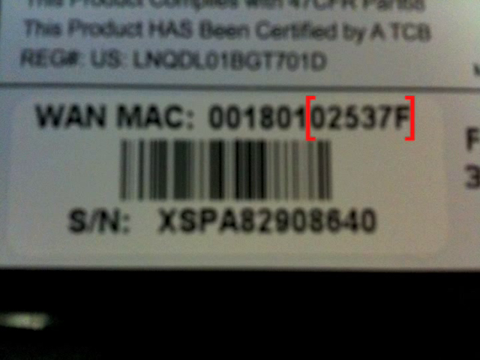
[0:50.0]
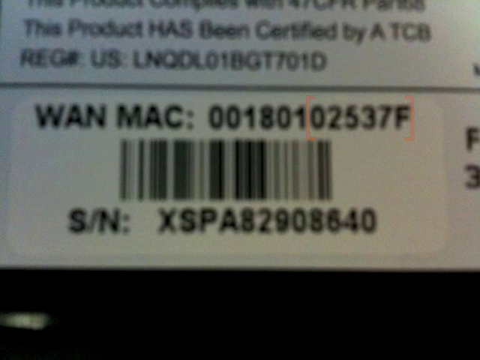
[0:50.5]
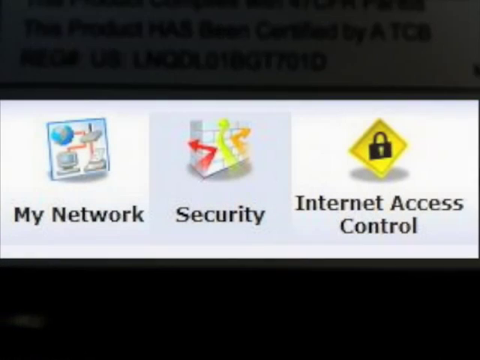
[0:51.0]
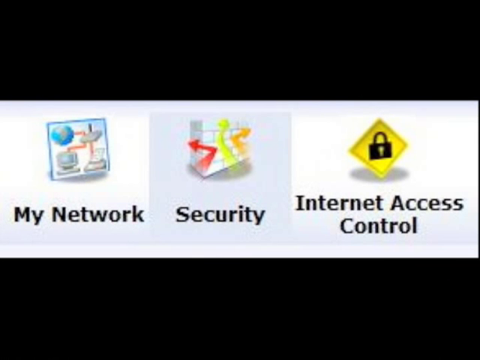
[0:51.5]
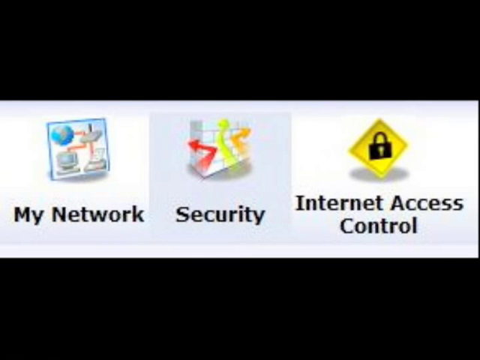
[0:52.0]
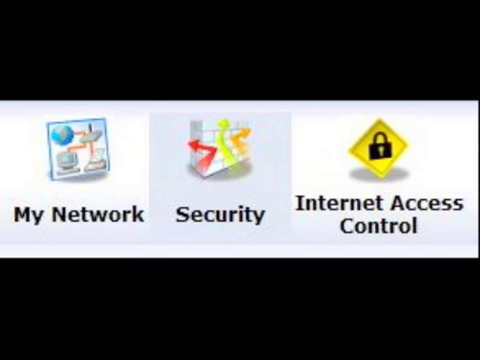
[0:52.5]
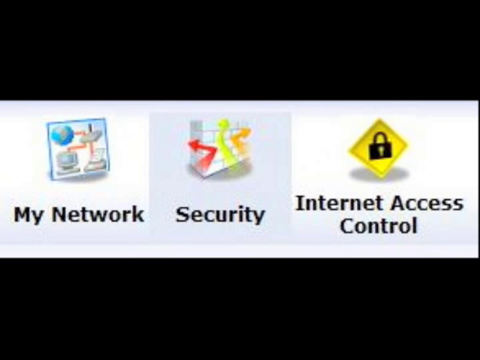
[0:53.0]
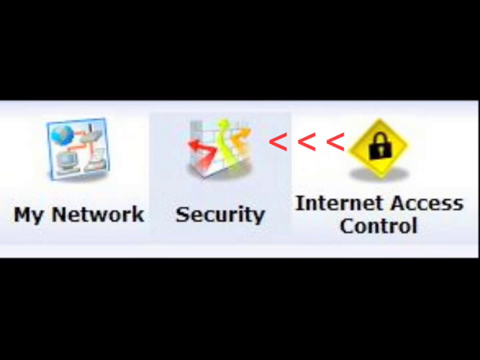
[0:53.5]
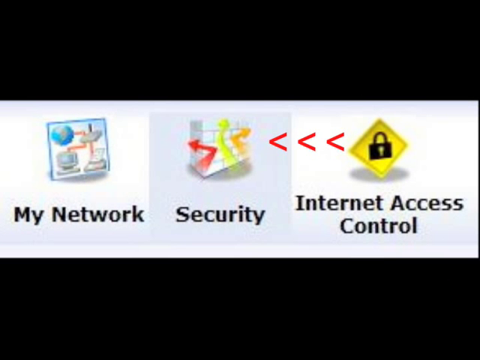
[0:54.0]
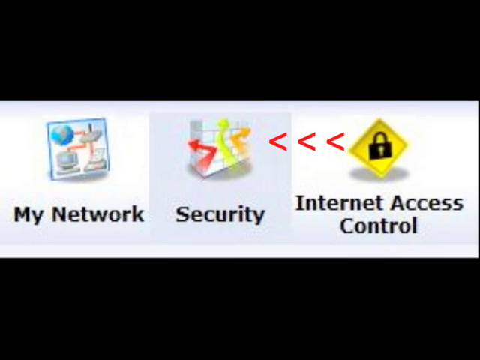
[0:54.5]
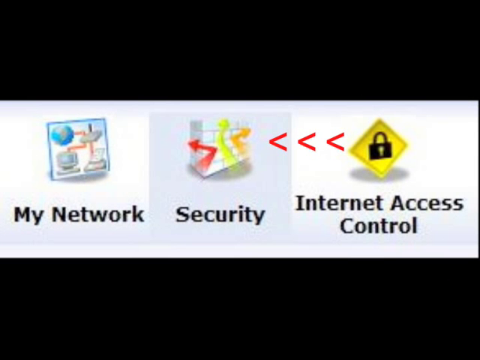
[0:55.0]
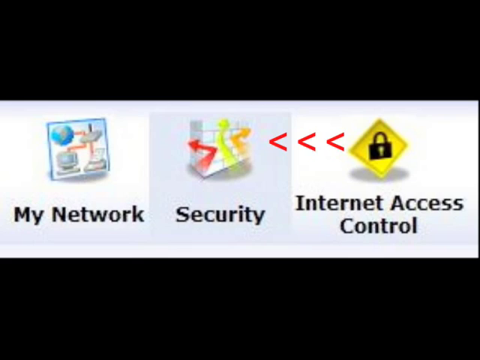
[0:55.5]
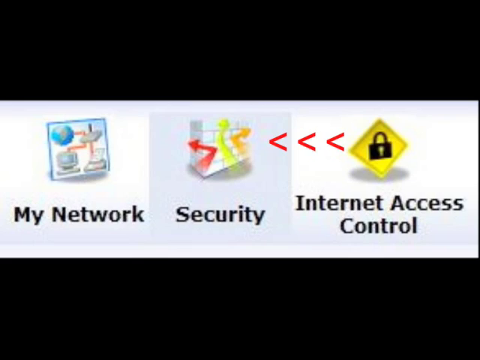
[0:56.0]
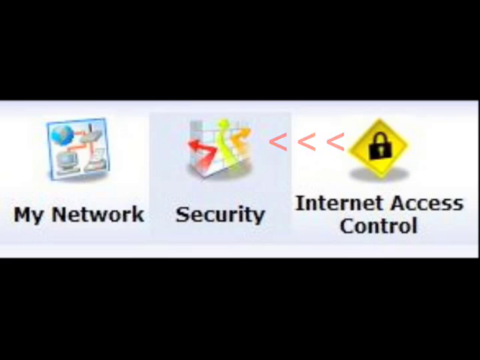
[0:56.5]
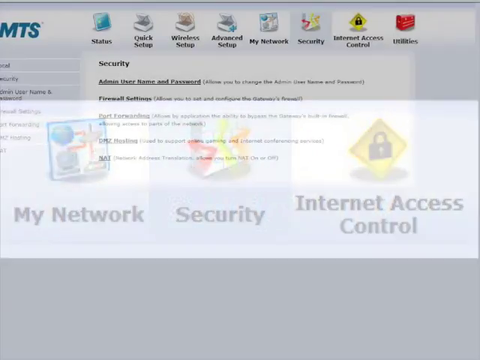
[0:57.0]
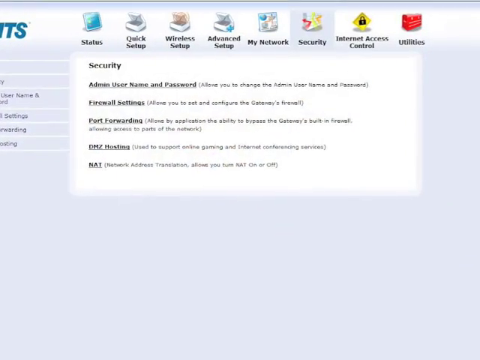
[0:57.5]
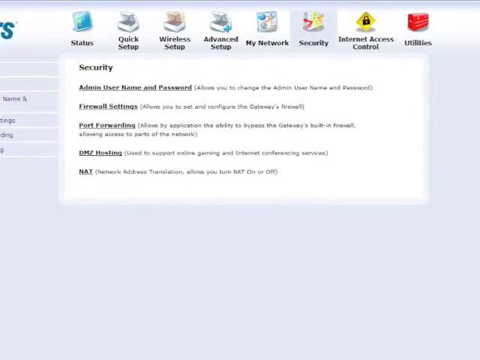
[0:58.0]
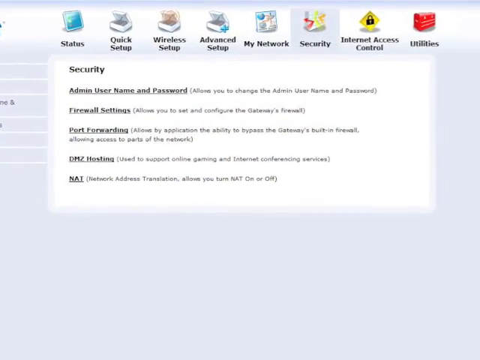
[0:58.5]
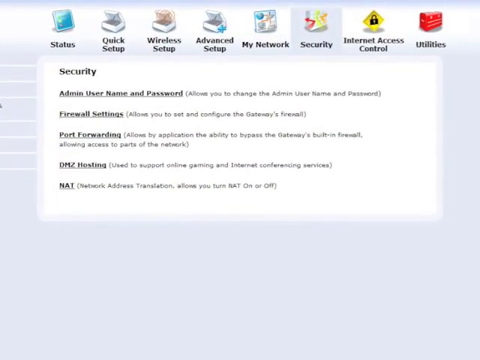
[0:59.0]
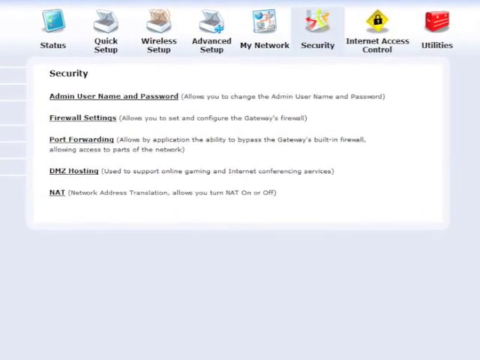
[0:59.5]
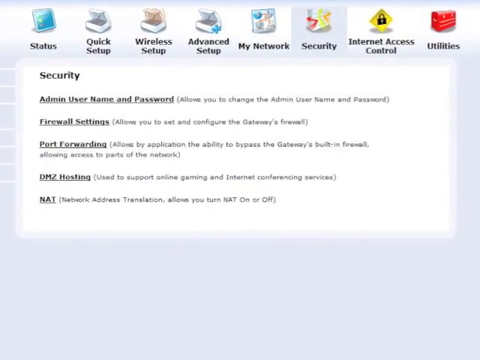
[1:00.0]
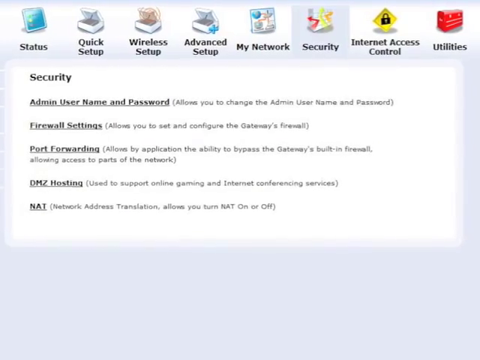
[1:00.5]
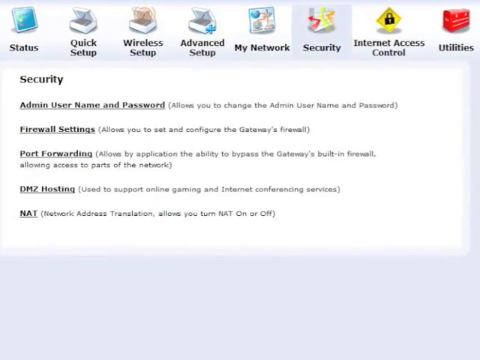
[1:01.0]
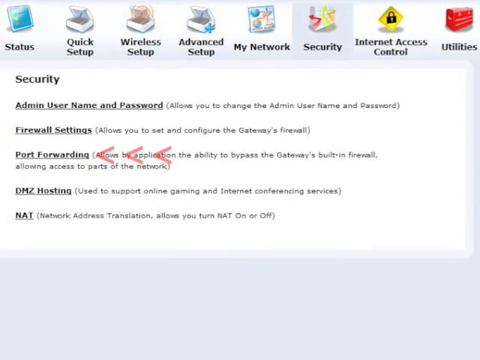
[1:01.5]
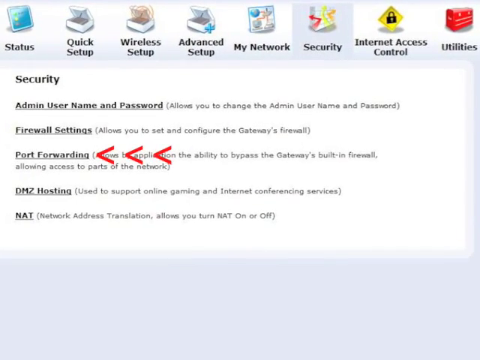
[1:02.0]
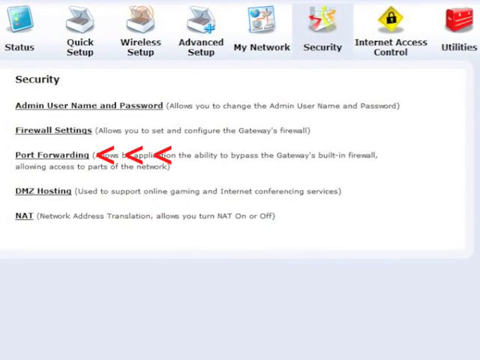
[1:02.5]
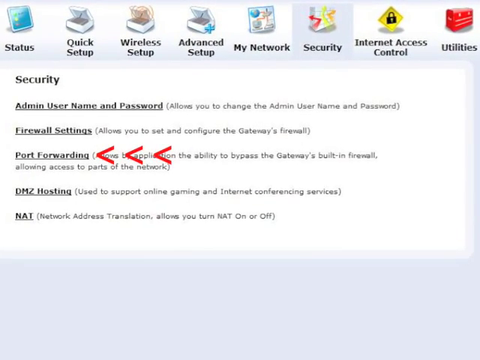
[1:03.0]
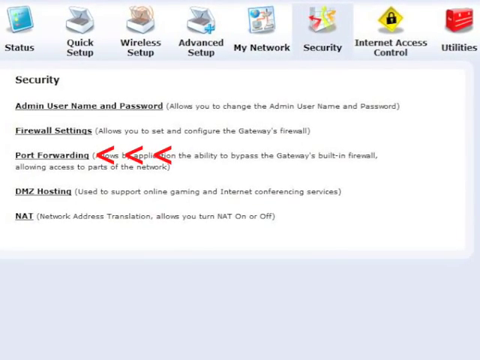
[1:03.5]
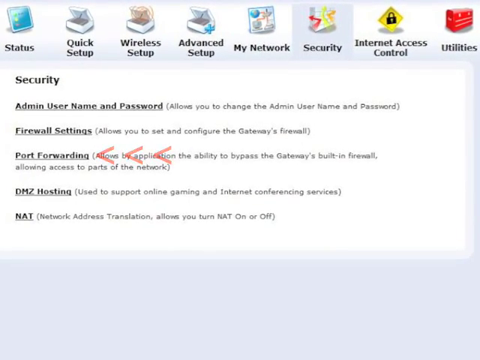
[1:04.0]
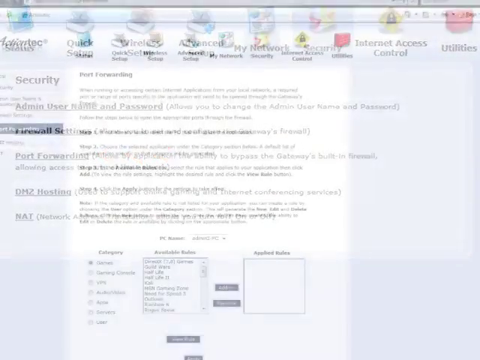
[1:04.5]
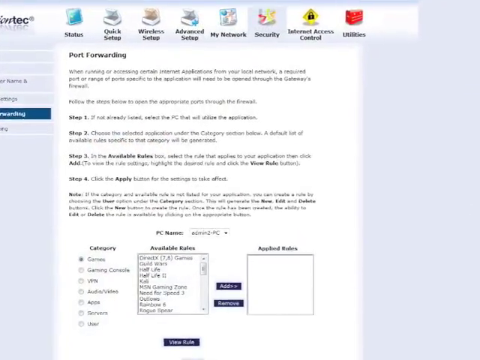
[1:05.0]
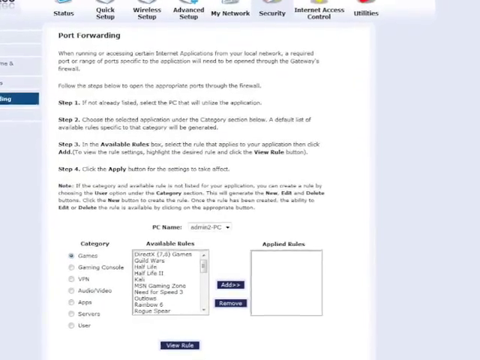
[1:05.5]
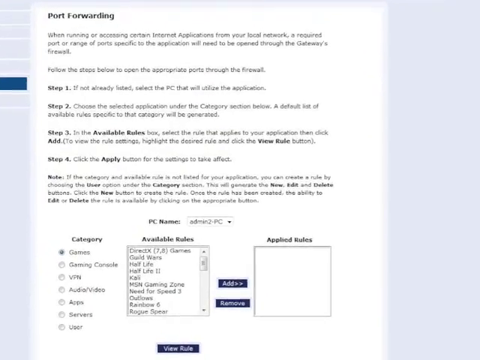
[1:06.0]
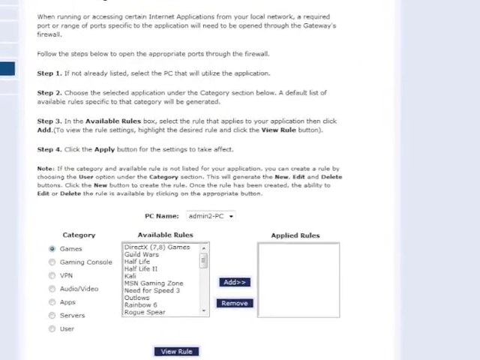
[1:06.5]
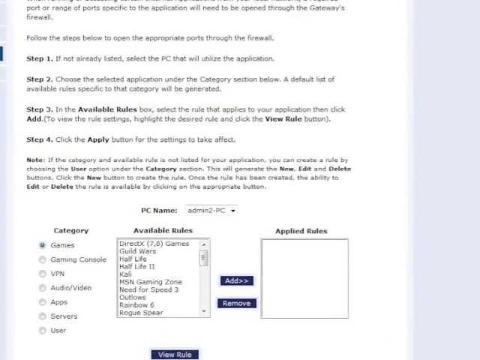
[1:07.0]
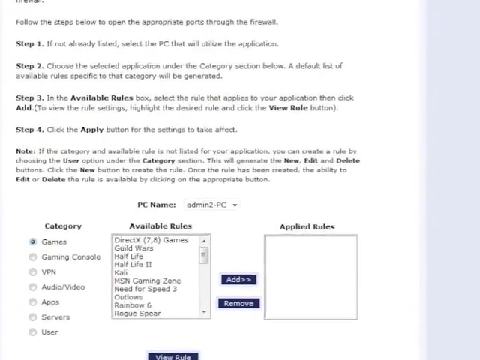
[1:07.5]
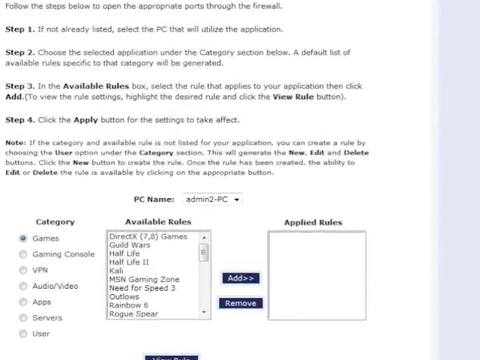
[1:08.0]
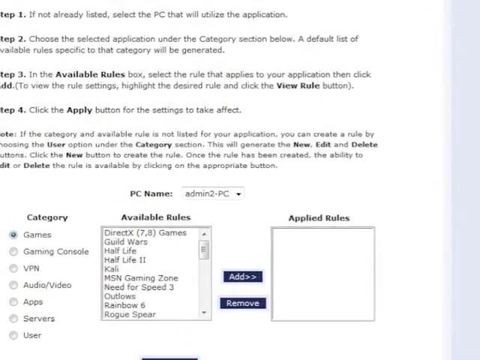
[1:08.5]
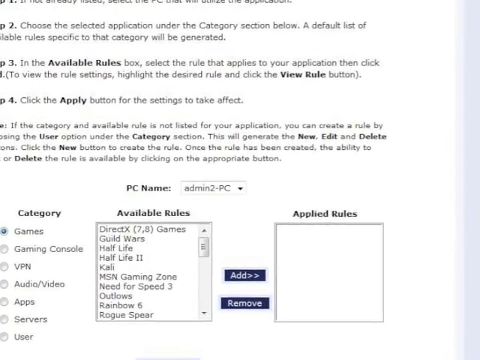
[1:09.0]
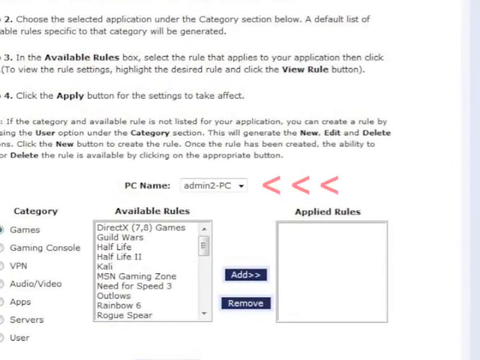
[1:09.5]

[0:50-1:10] The back of the product is shown, with what looks like the serial number area. It says "WAN," followed by a series of numbers, 00180102537F. The part "025374F" seems to be the focus; it is marked with a red bar and some type of red parentheses. Next, three options with icons appear: My Network, Security and Internet Access Control, with small arrows pointing to Security. The security window opens. A menu beside it lists Status, Quick Setup, Wireless Setup, Advanced Setup, My Network, Security (highlighted and open), Internet Access Control and Utilities. The security window shows admin username, password and firewall settings. The port forwarding settings seem to be of interest, and they are clicked, leading to another area for that option, where the focus seems to be on the PC name.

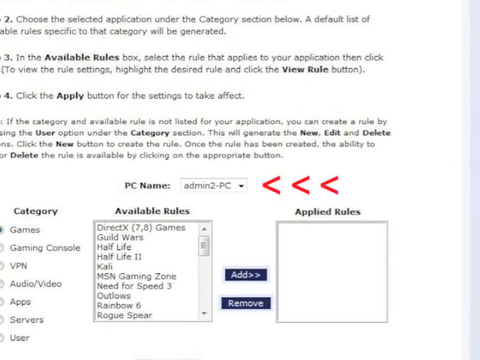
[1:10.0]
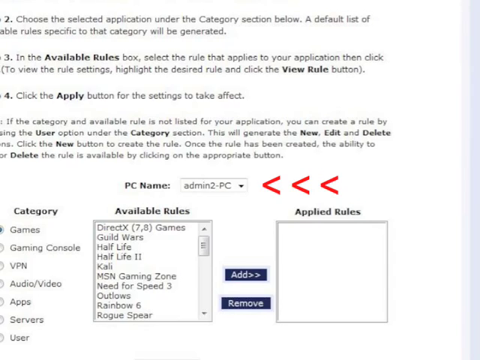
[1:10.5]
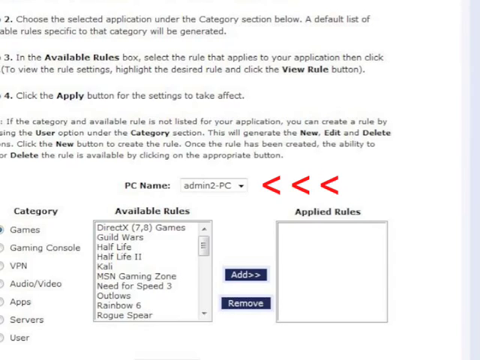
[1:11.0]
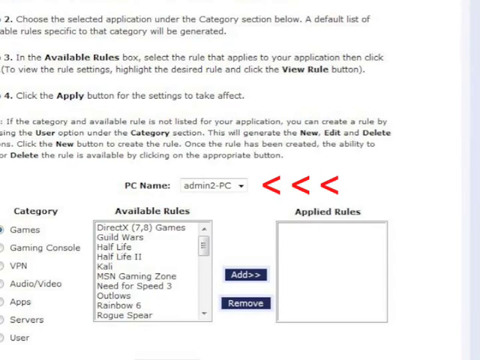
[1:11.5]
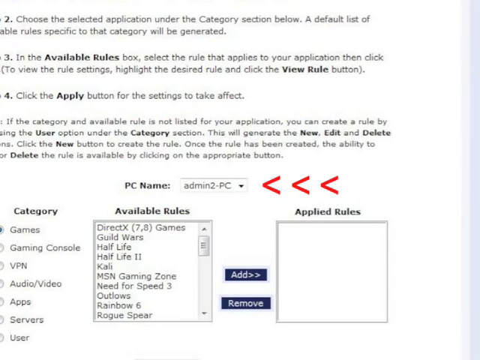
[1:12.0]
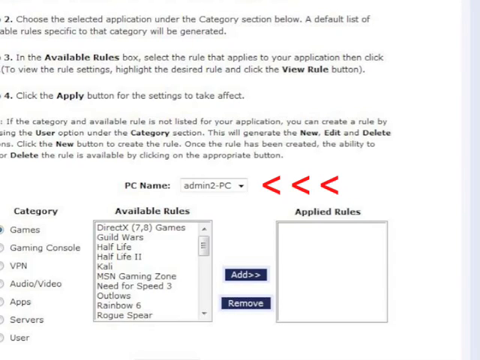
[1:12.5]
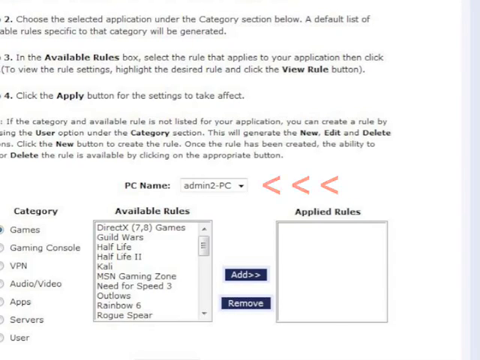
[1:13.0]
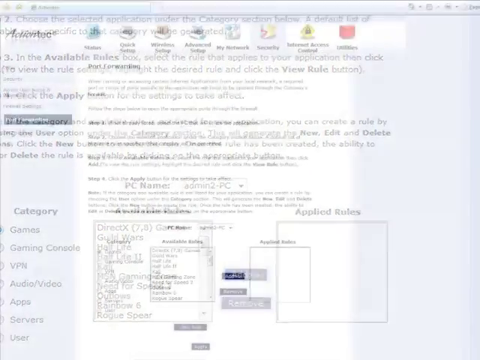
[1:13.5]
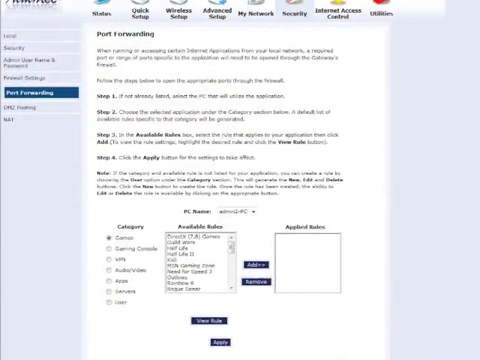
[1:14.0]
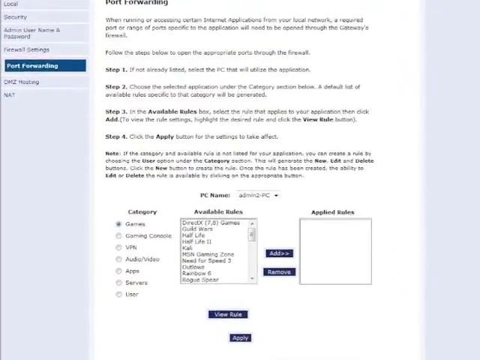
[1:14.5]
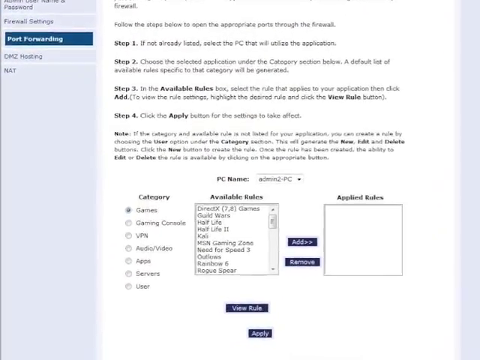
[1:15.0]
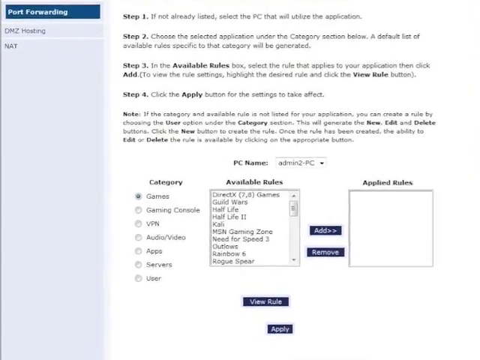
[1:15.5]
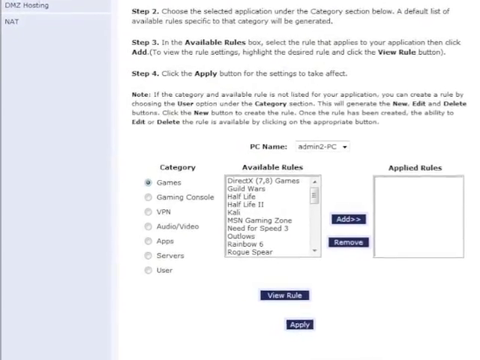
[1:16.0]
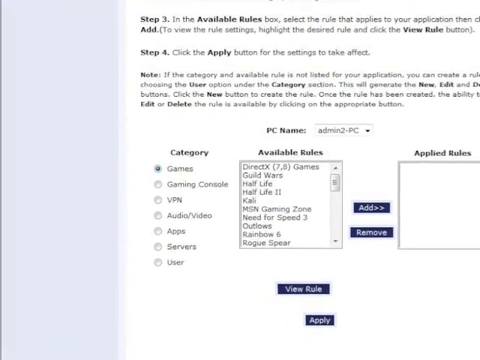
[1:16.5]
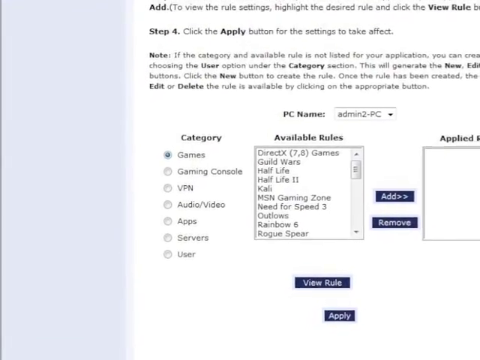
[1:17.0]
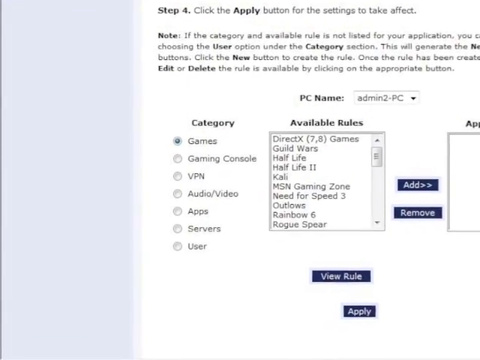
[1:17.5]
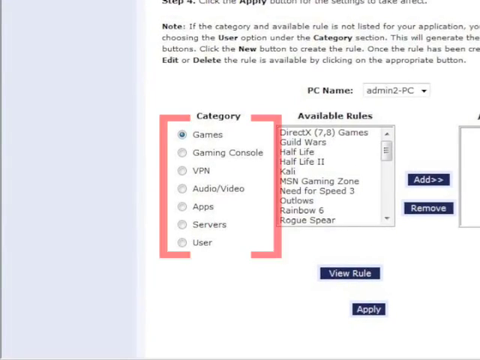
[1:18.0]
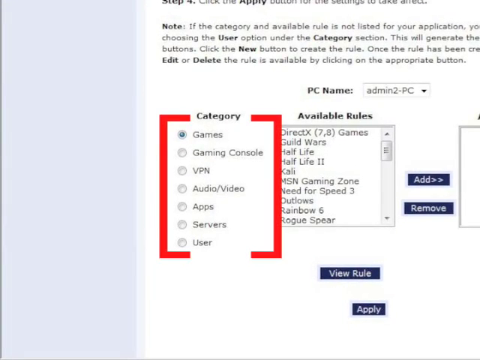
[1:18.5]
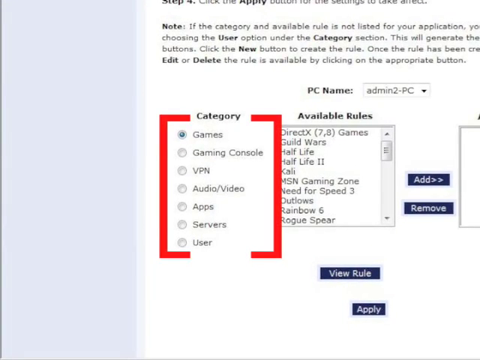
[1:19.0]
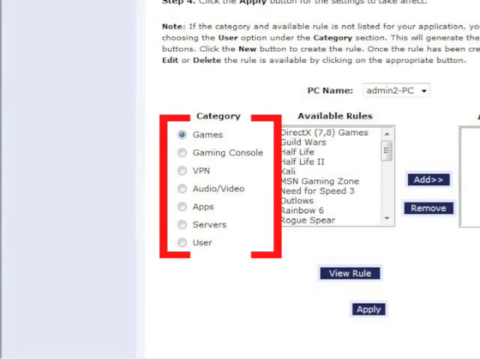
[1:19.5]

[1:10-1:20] A red arrow is next to an option for the PC name within a security-related category. Under each category are subcategories: Games, gaming console, VPN, audio video, apps. On the right-hand side is "available rules" with a series of options that all seem to be game-related to a degree. The view then pans out to show the entire category, which is highlighted next, apparently to view its contents, with games highlighted.